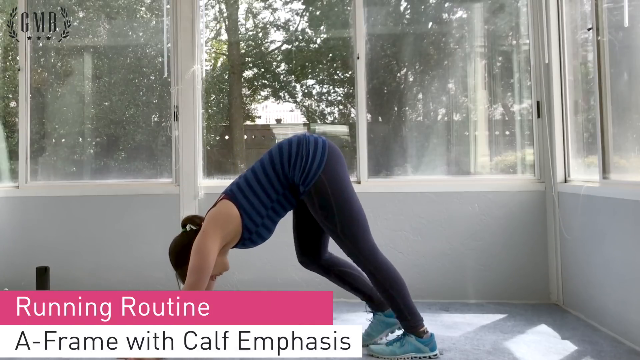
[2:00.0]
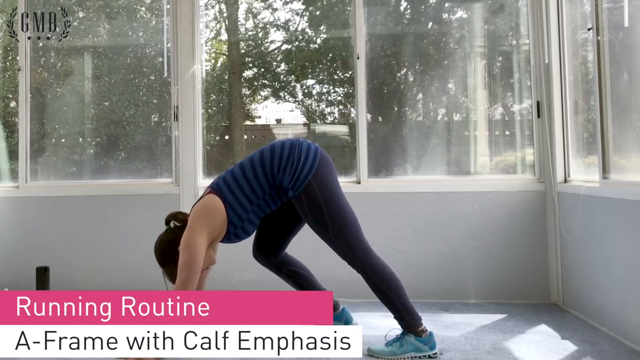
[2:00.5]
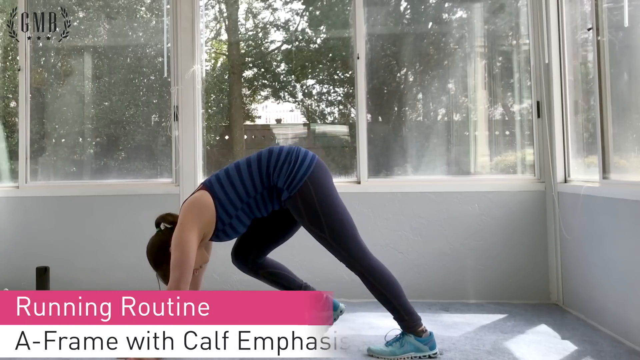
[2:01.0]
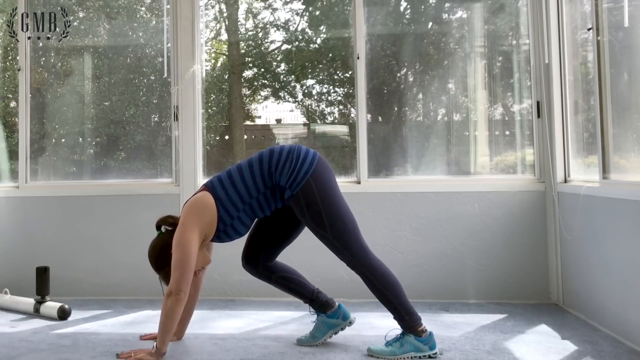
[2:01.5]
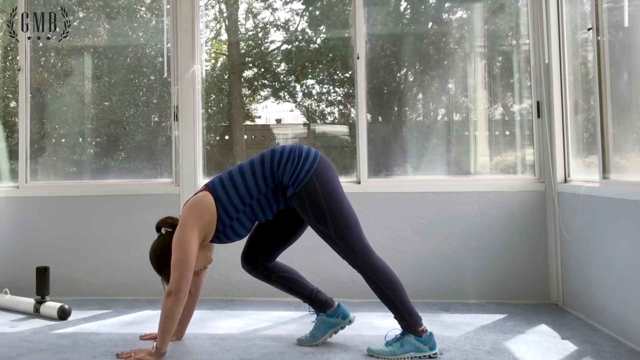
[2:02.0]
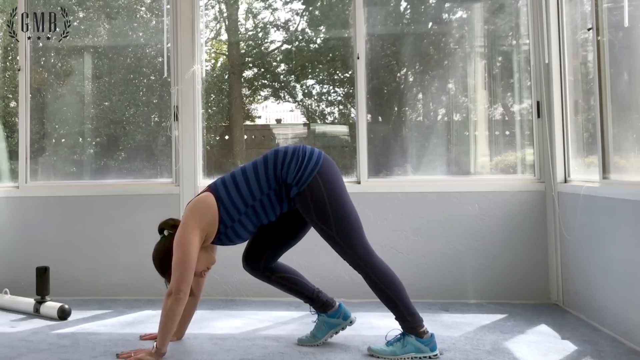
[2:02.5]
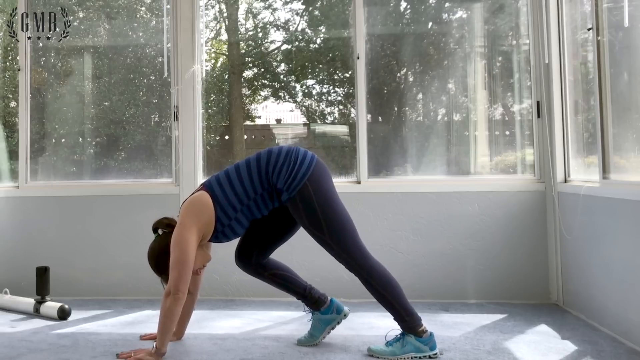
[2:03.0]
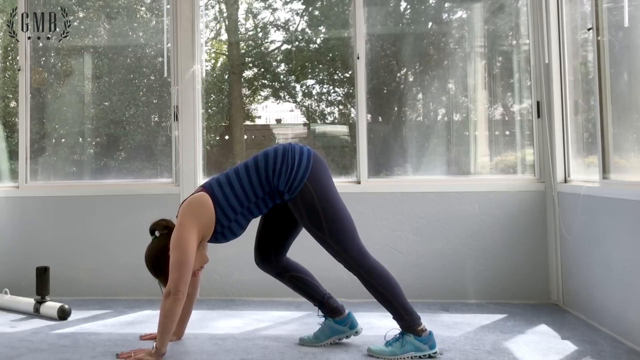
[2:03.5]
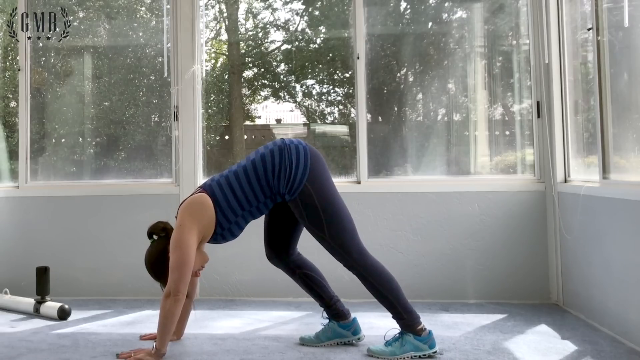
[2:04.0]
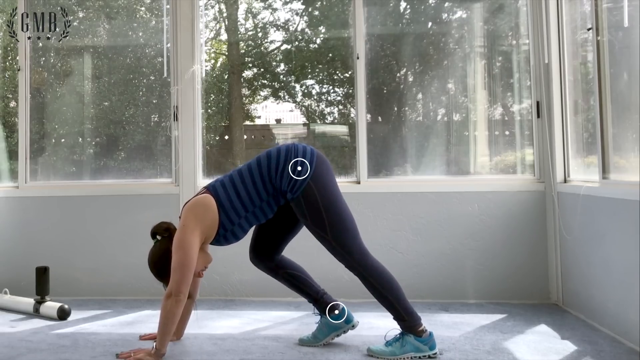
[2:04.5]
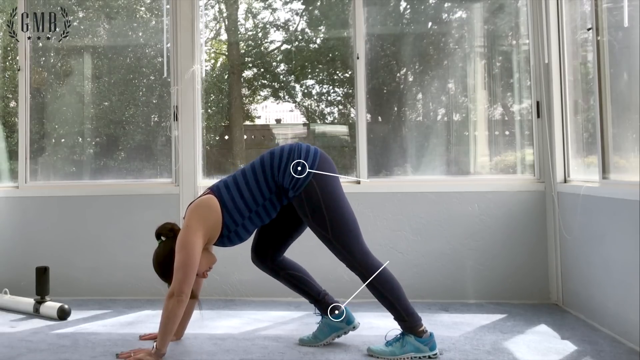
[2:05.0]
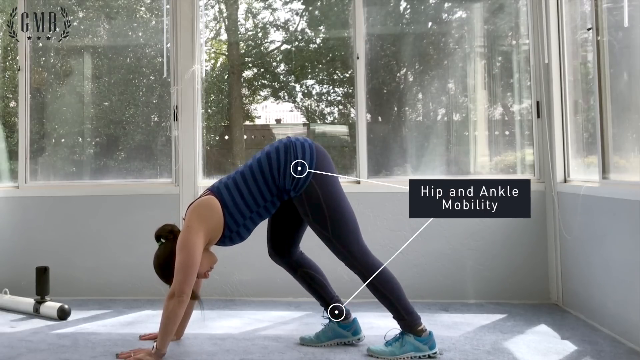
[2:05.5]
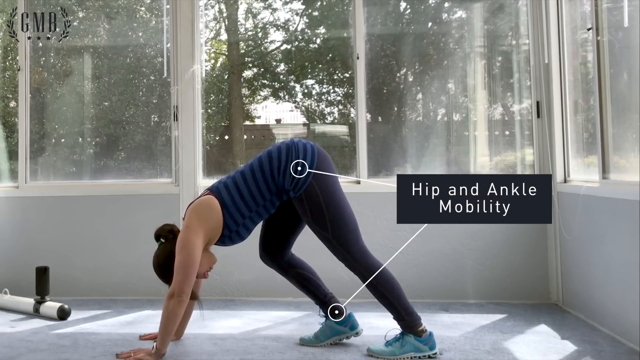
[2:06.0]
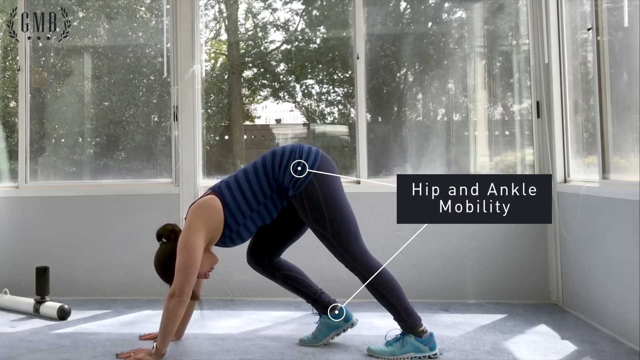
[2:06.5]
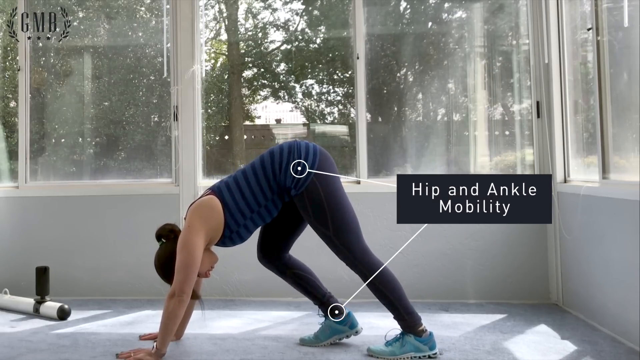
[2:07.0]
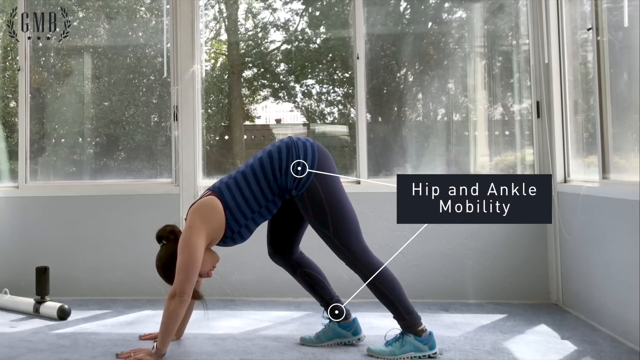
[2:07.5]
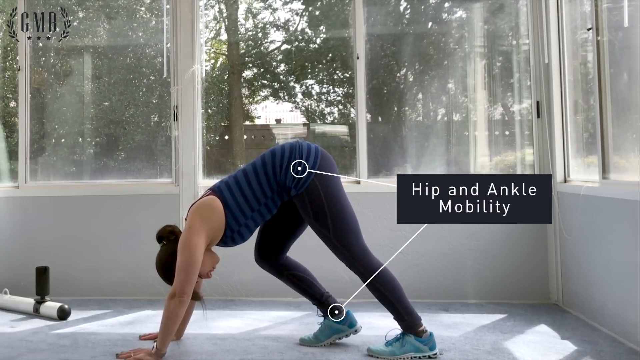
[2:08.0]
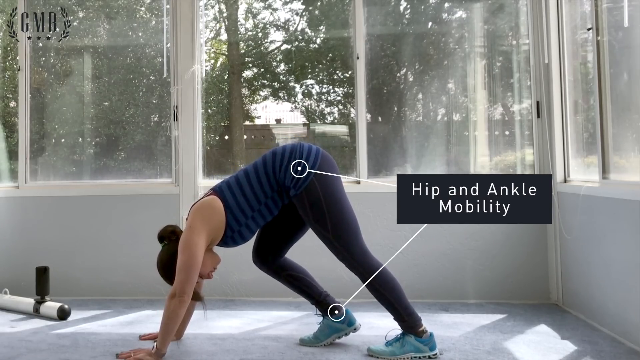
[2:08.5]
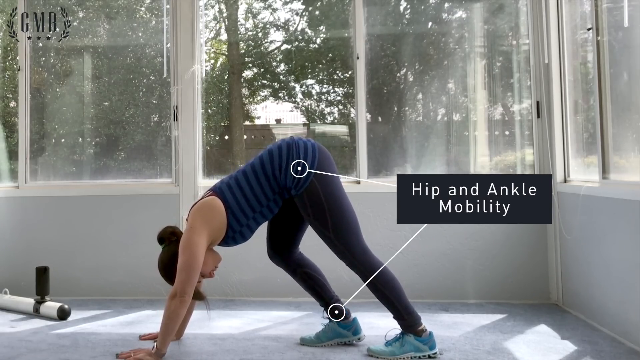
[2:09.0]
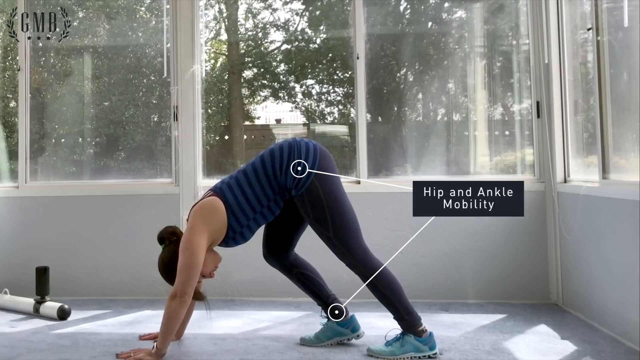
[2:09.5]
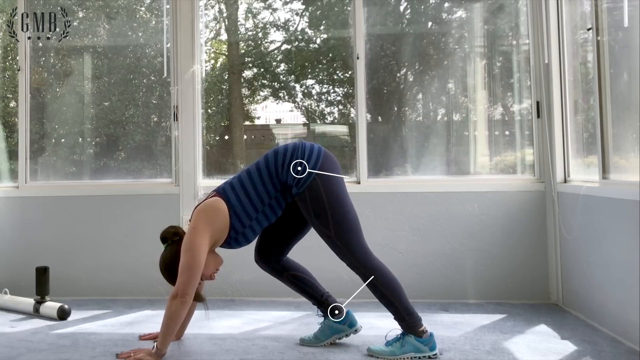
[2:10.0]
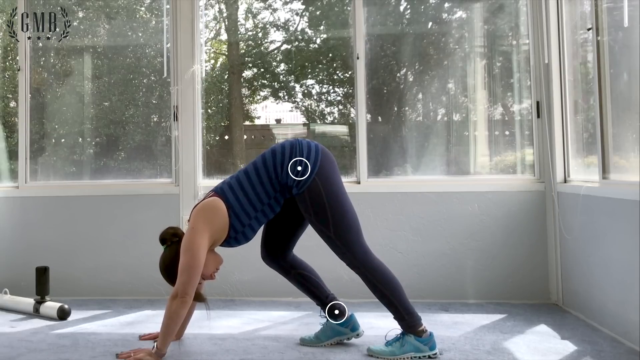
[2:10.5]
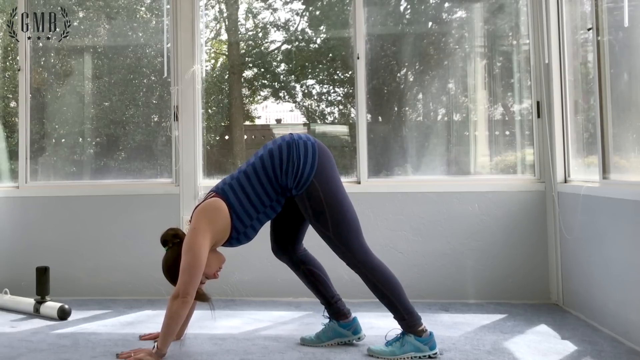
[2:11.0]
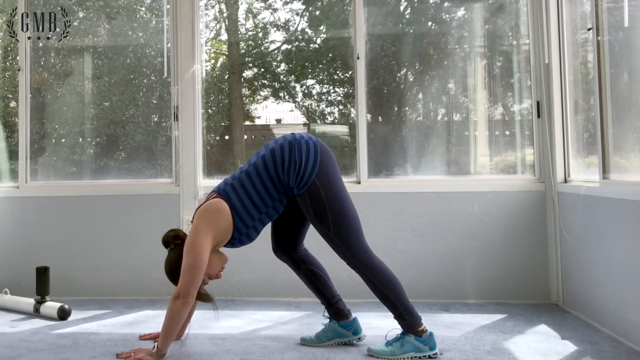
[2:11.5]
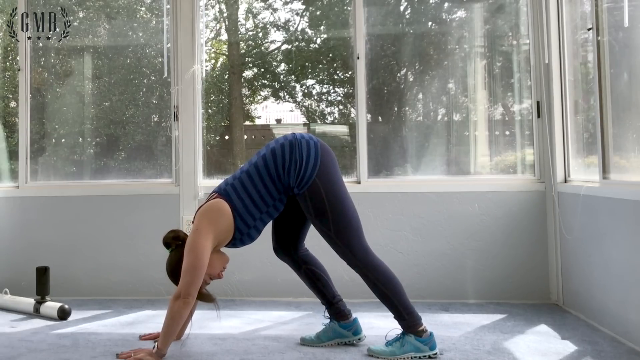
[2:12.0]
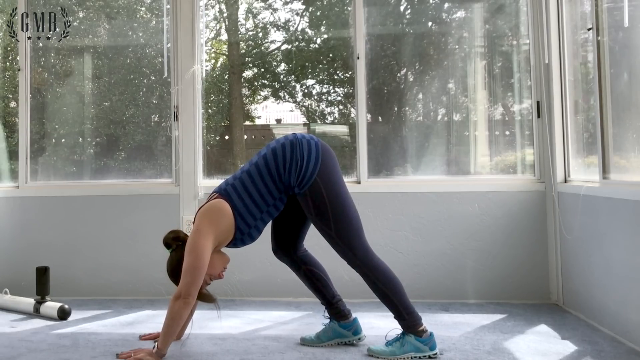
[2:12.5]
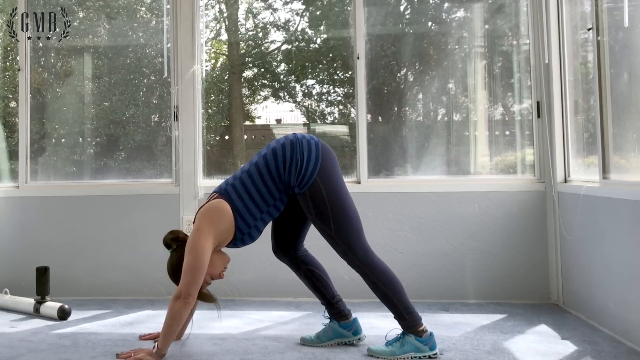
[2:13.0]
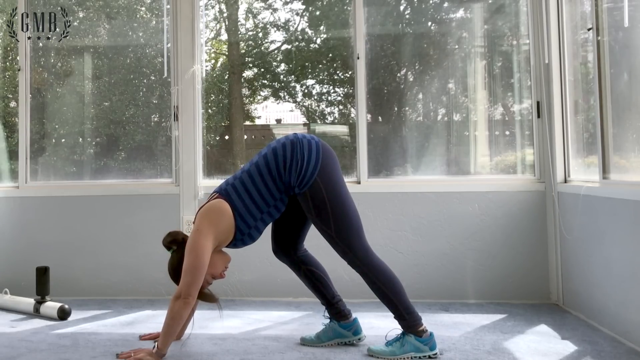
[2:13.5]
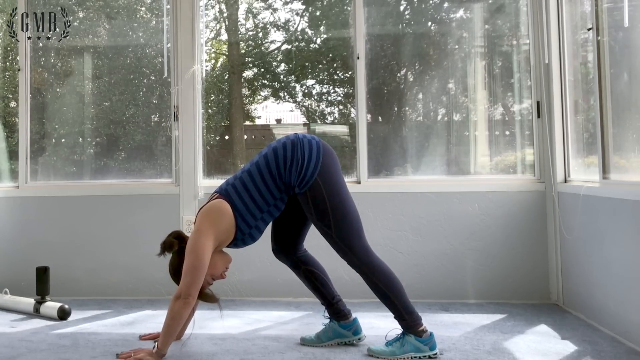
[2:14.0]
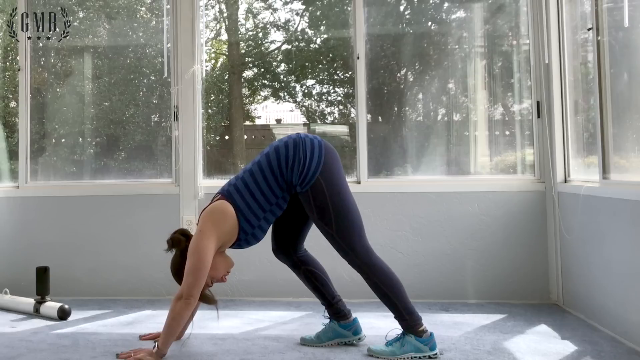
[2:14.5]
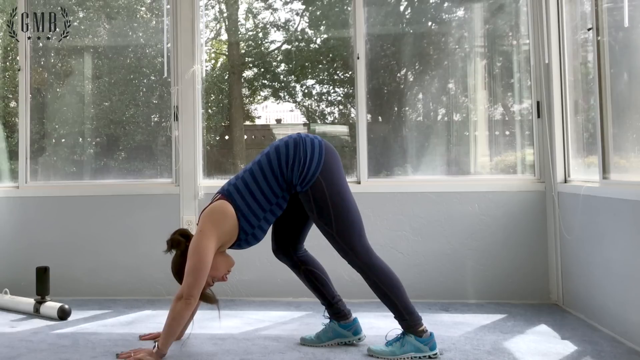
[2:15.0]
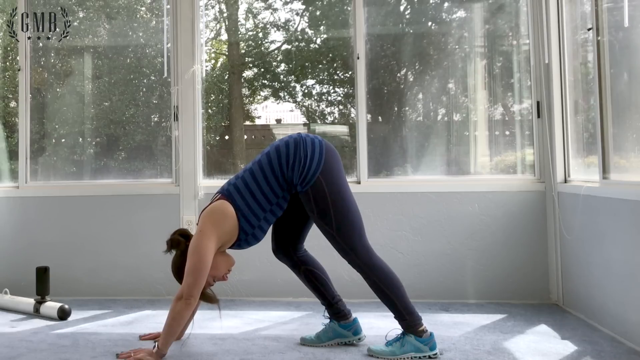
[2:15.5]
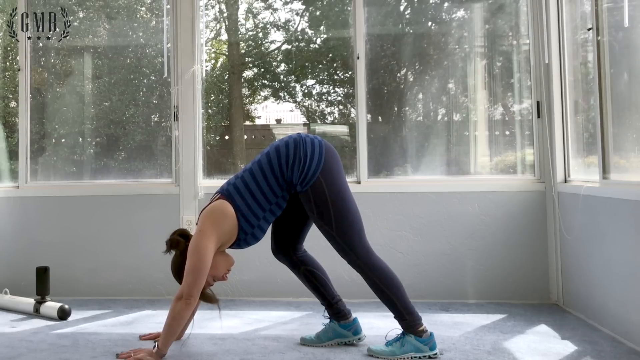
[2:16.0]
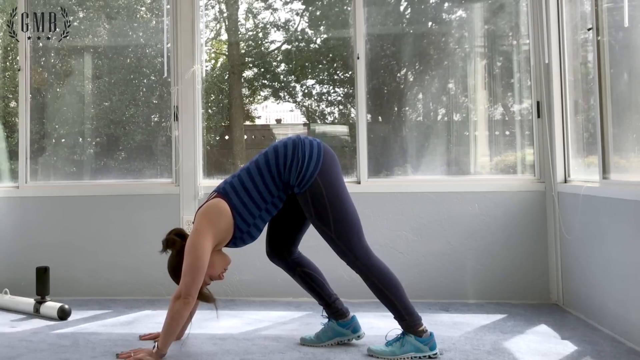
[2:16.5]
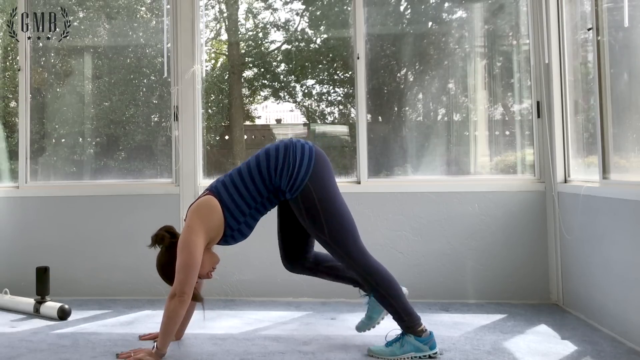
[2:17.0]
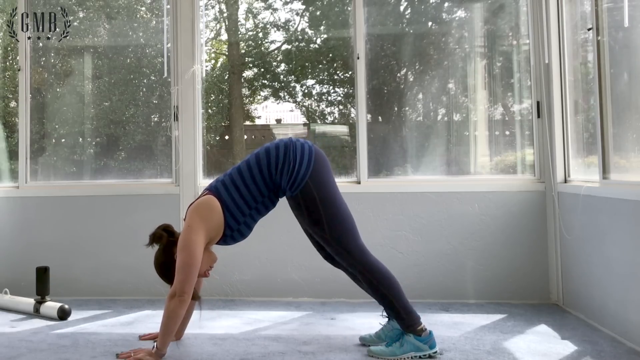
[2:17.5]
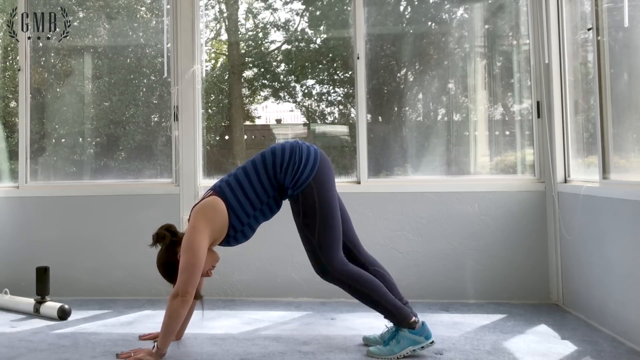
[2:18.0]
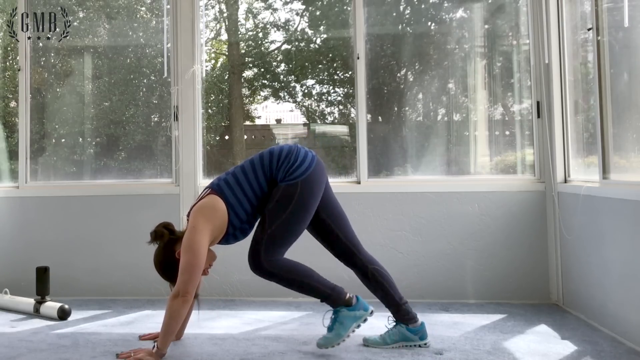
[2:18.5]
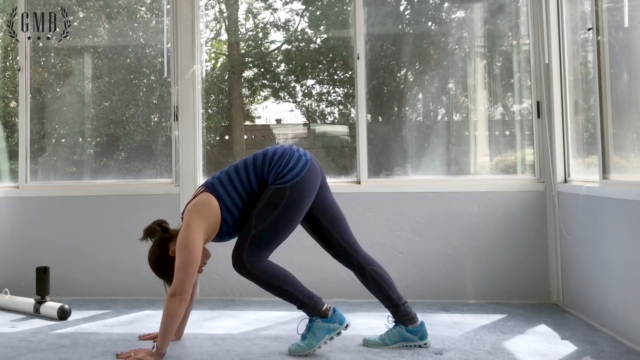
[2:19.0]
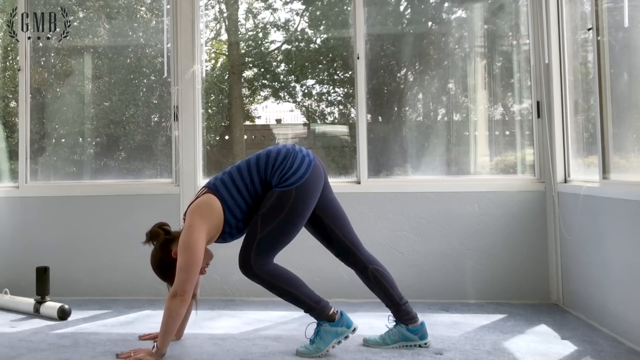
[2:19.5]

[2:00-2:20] A woman is doing an exercise routine, with a pink banner with white lettering at the bottom that says "Running Routine." Her feet are on the ground toward the right side of the screen, her hands are on the ground on the right side, and her bottom is up in the air. She wears a tank top with striped blue colors and tight blue leggings. She pulls the knee in the background forward until it is almost level with her chest, and the heel on that side comes up off the ground. She puts it back a little and slowly bends the knee inward and outward. White dots appear, one on her hip and one on her ankle, with lines leading to a pop-up on the right side that says "Hip and Ankle Mobility." She repeats the motion several times, then the dots, lines and pop-up disappear. She stands still for a second and moves her head a little, then puts her foot back even with the other one. She then pulls the leg in the foreground forward and starts the same bending motion with it.